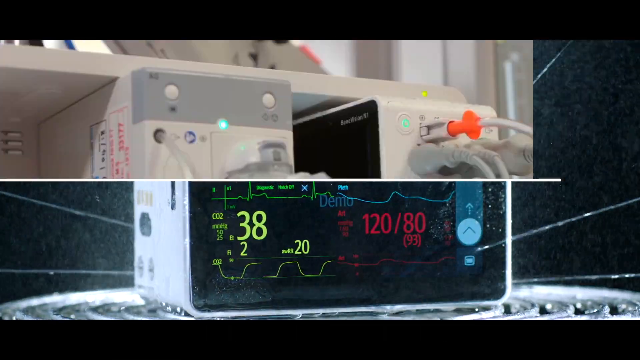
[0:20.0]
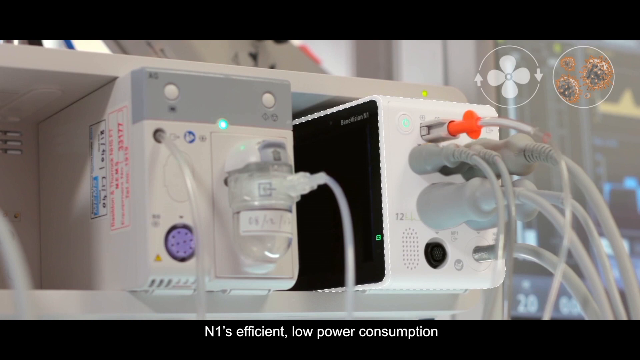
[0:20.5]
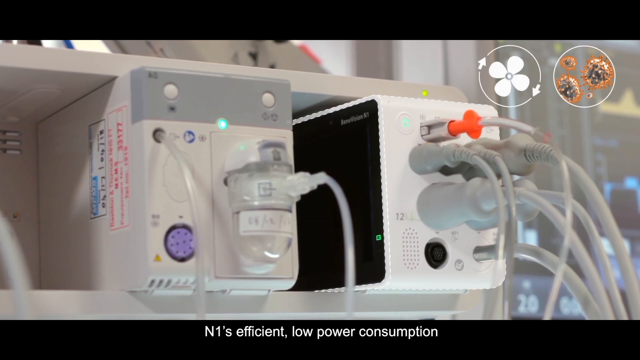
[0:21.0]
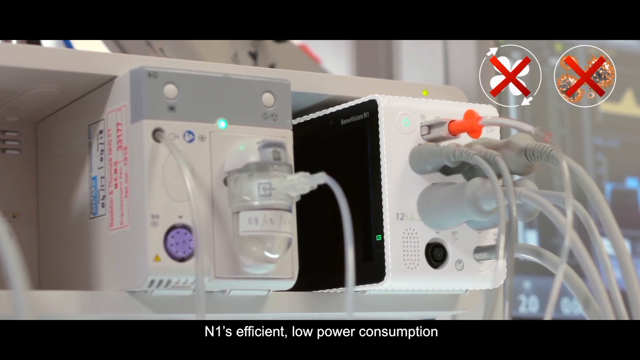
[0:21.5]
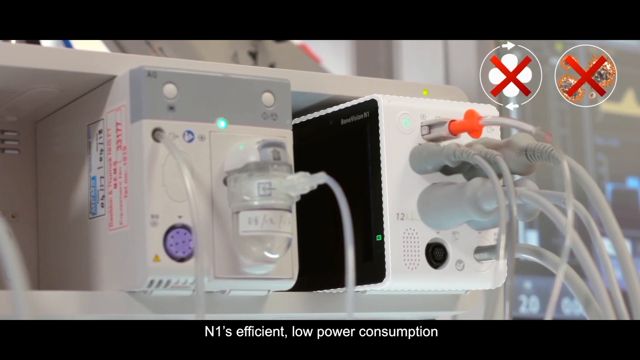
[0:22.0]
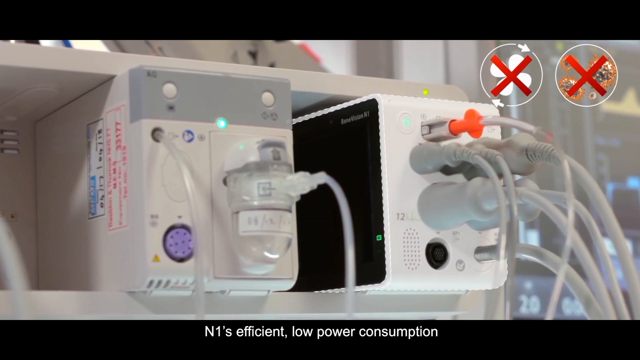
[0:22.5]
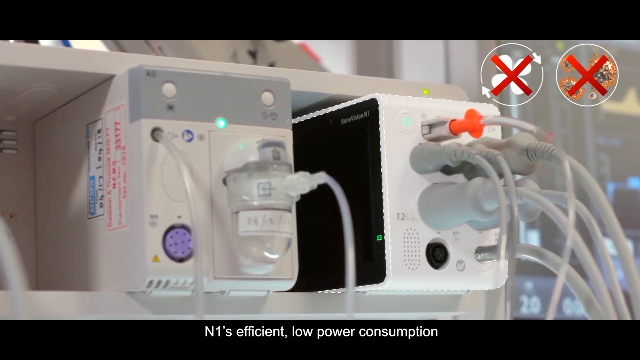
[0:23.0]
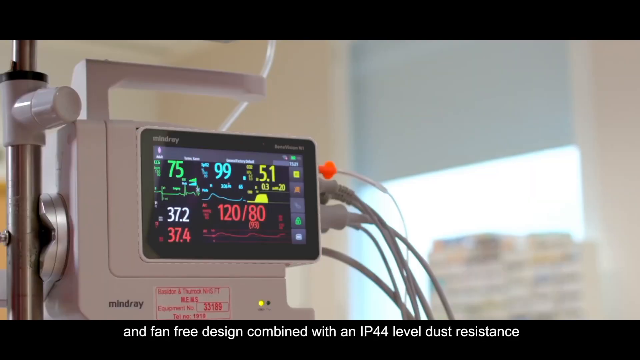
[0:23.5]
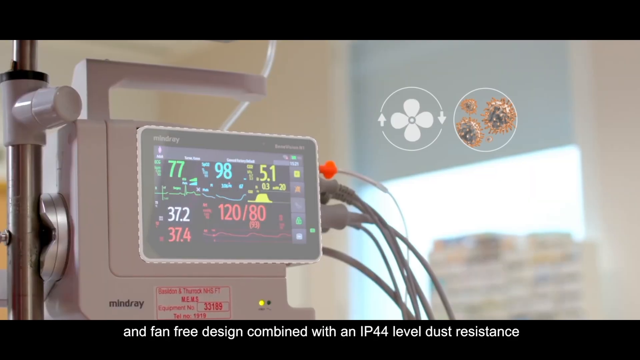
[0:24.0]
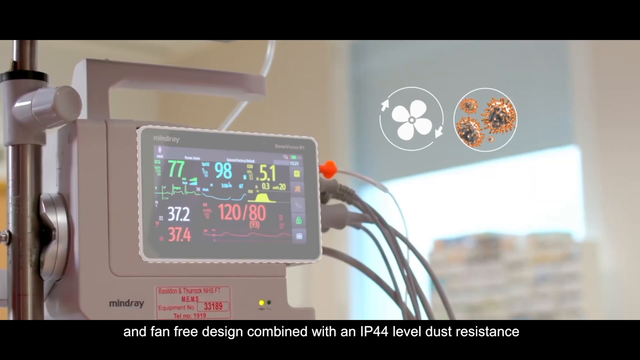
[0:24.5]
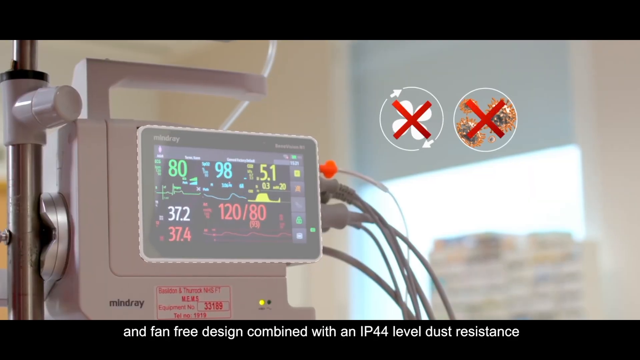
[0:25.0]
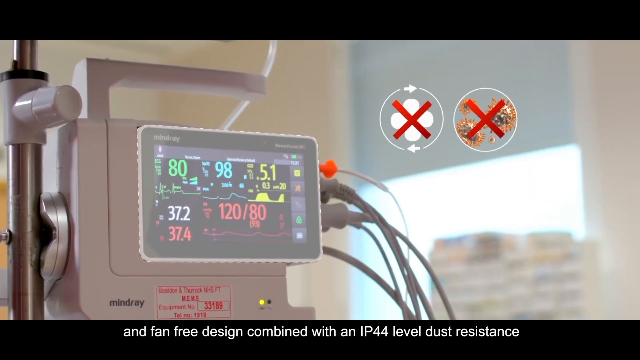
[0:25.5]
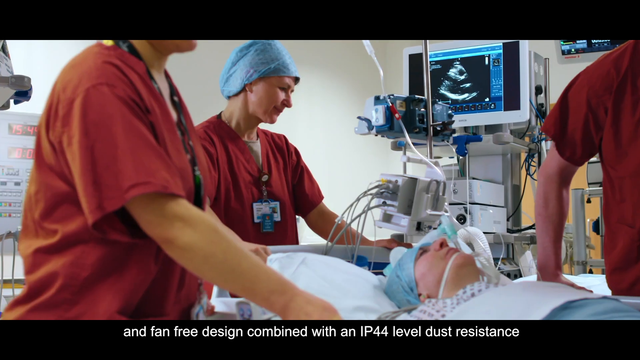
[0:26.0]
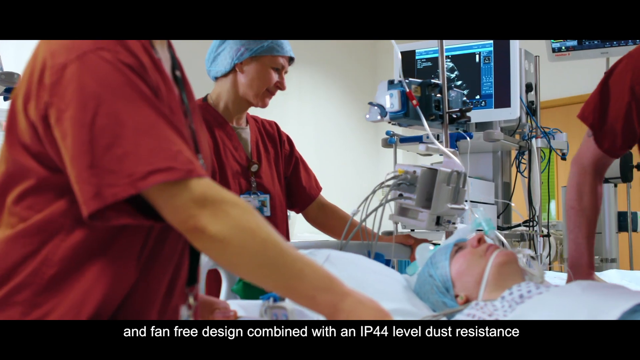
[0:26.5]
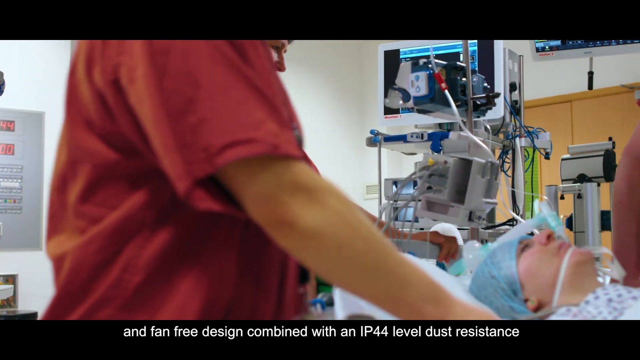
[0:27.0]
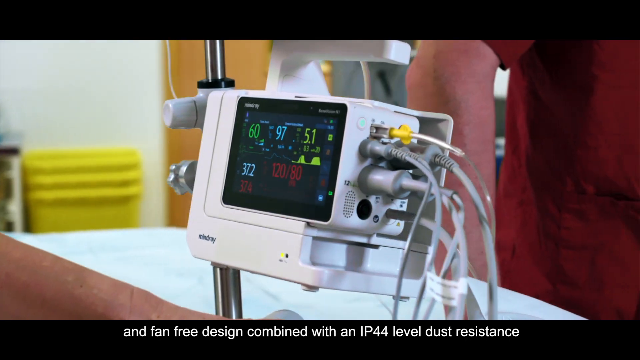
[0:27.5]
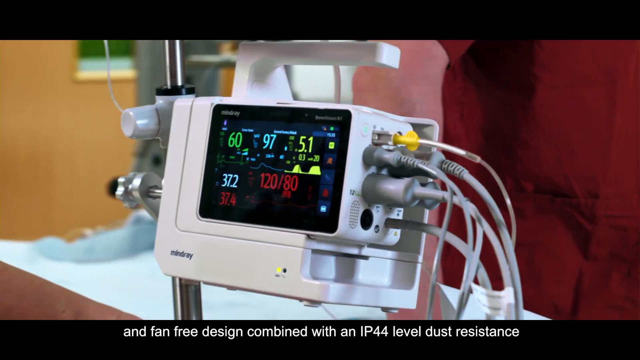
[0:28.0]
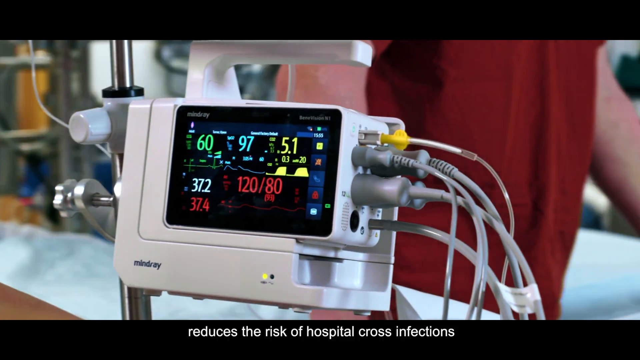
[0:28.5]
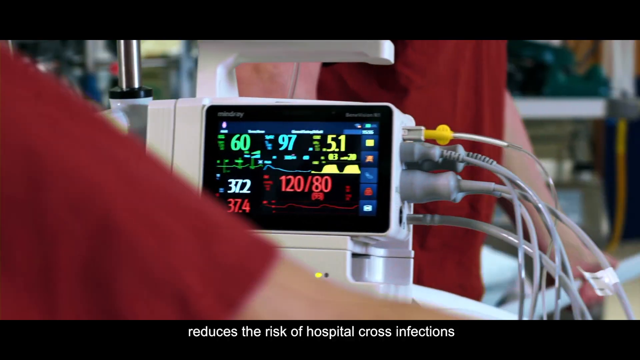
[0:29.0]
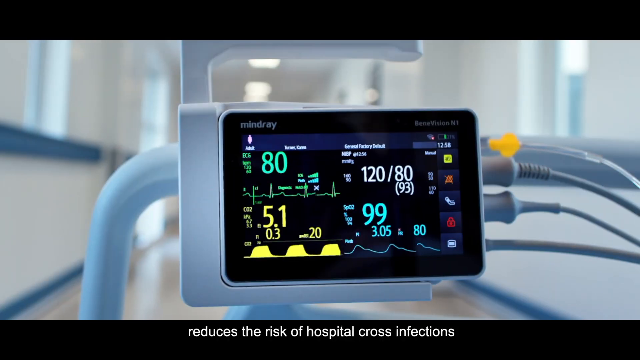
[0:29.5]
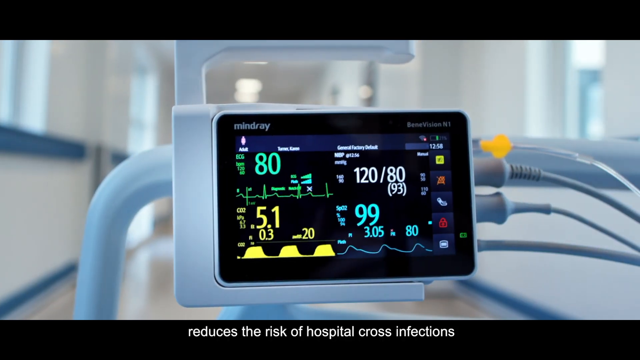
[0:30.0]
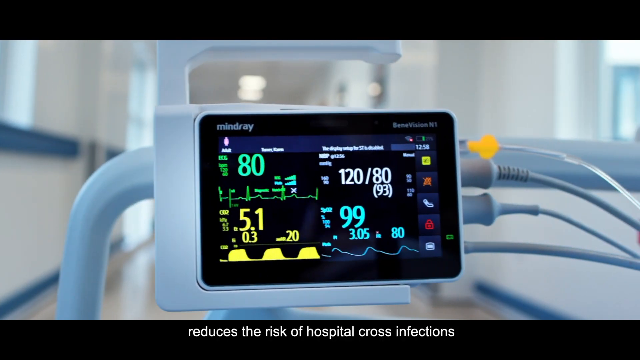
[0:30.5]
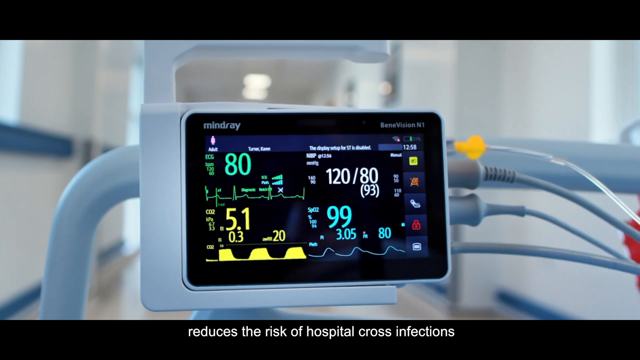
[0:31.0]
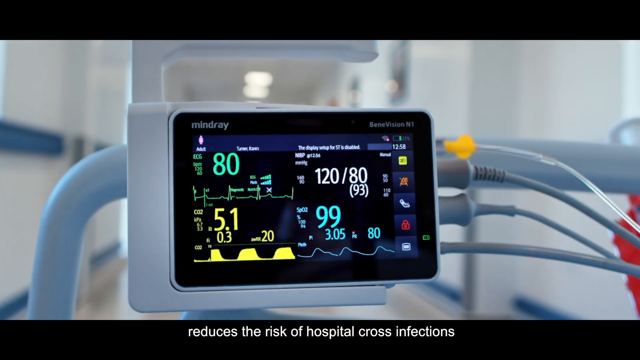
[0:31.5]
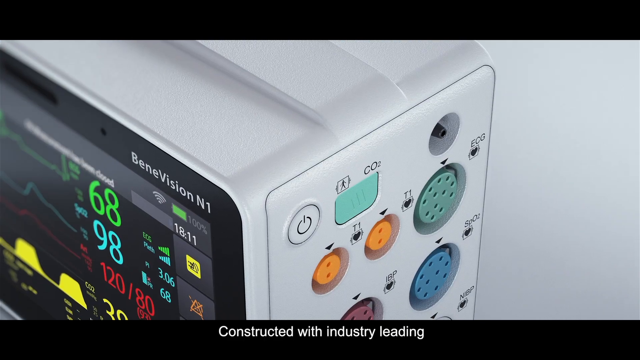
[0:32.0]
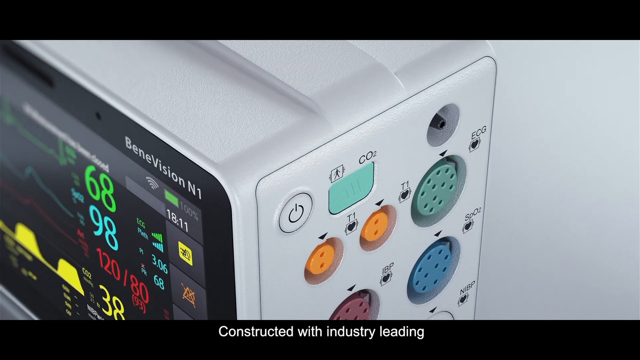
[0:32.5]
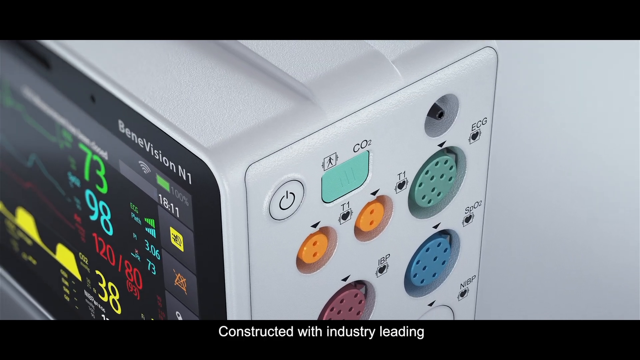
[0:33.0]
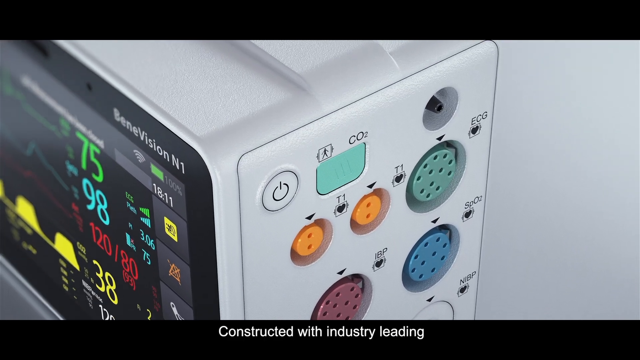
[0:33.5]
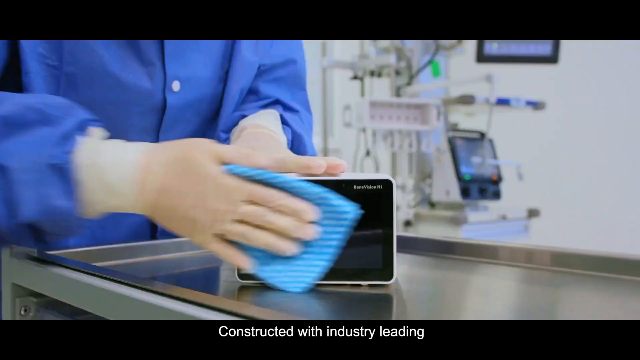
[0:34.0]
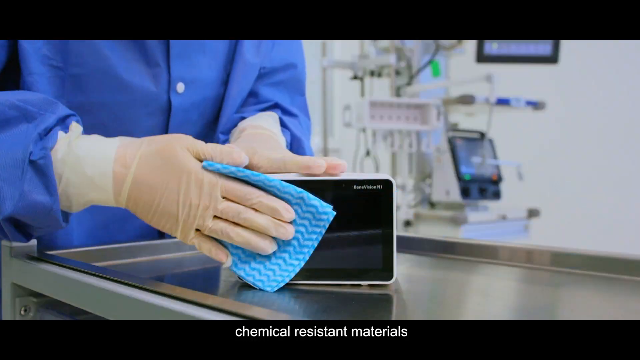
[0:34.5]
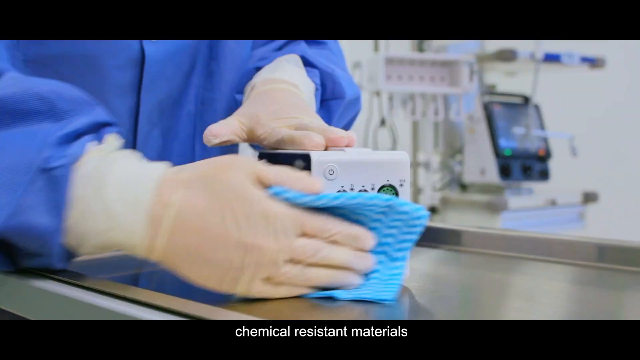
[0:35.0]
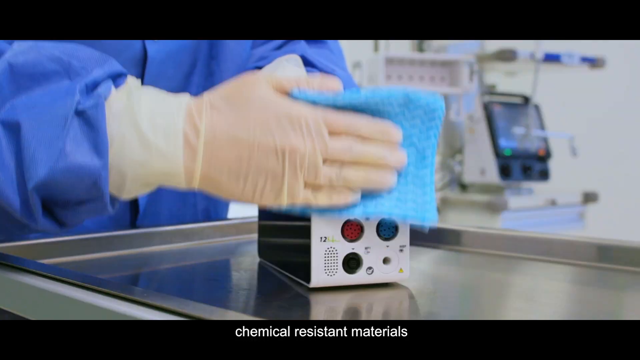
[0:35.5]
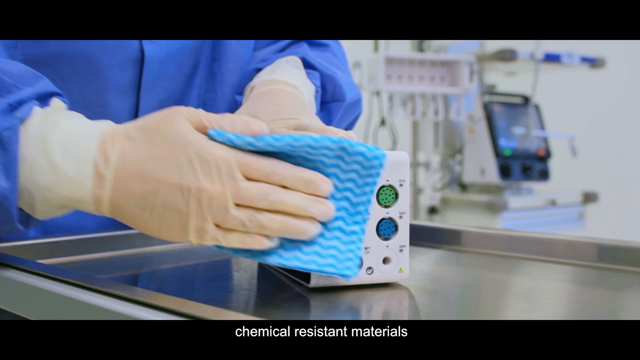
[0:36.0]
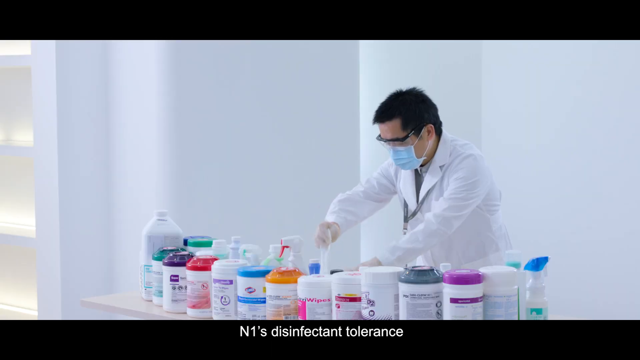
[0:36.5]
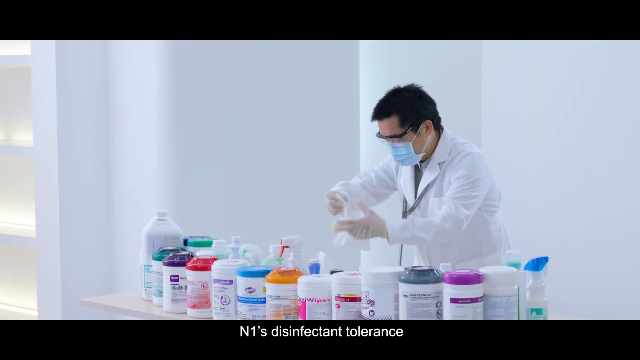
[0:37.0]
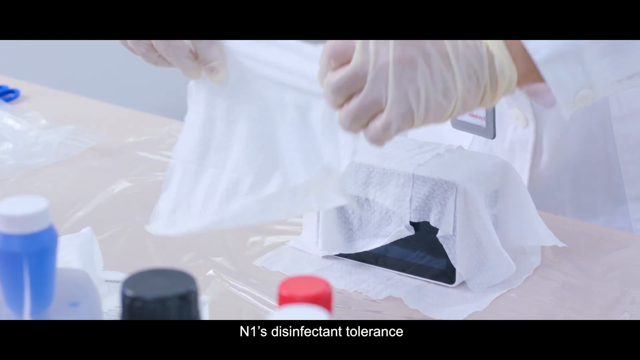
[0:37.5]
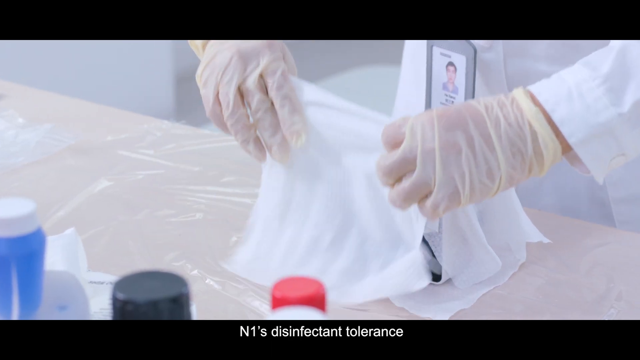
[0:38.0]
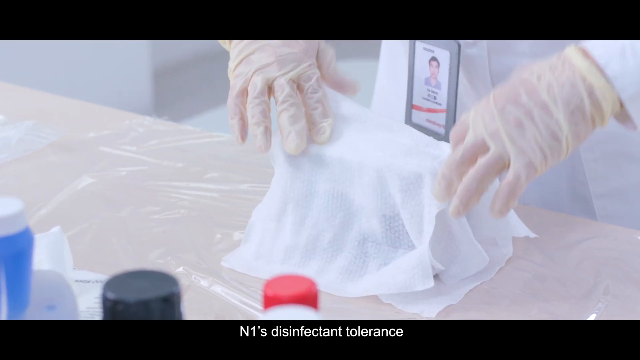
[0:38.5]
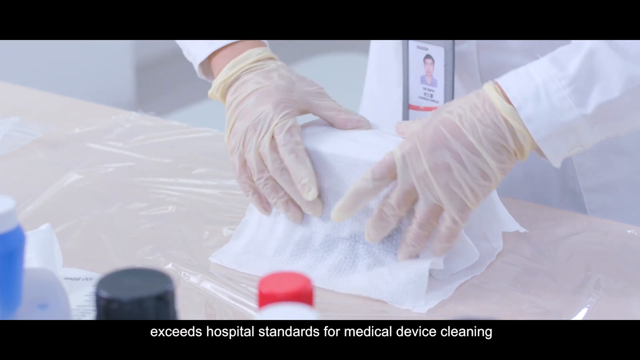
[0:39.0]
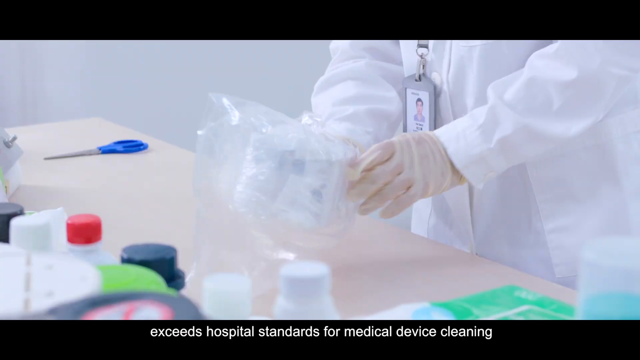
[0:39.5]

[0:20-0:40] More of the same machine is shown, now plugged in to something. Logos at the top right show a fan and some sort of dust or parasites, each in a circle and X'd out in the middle. Text says it has a fan-free design, then refers to a level of dust resistance, and then says that it reduces the risk of hospital cross infection. Next, text mentions chemical resistant materials, and the device is apparently being cleaned off easily, followed by text about disinfectant tolerance.